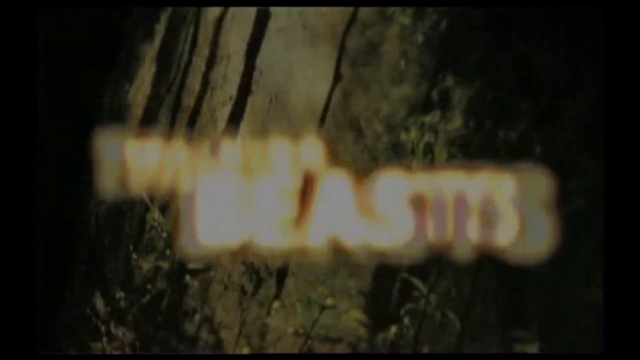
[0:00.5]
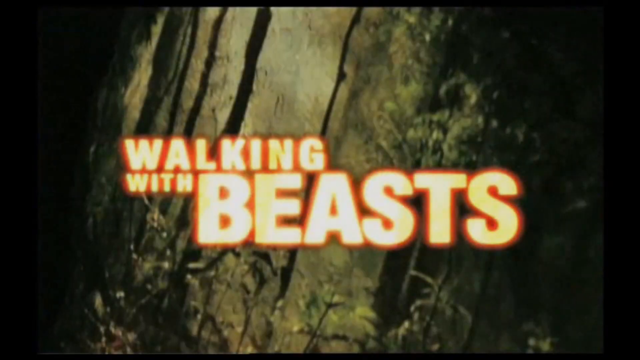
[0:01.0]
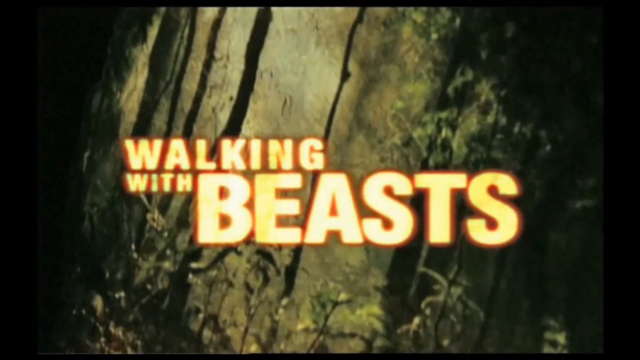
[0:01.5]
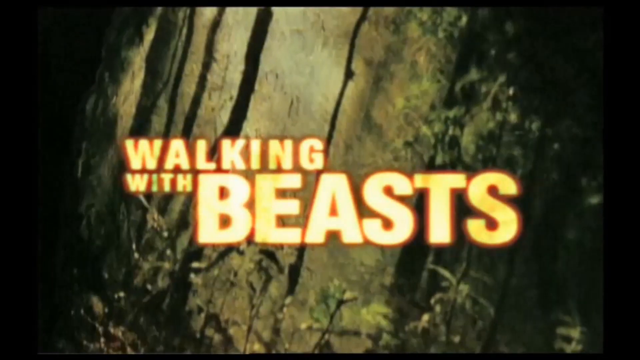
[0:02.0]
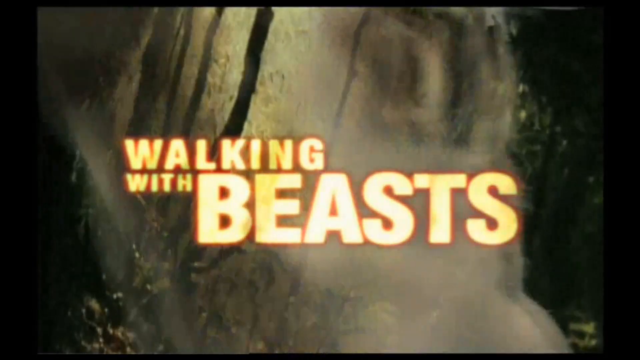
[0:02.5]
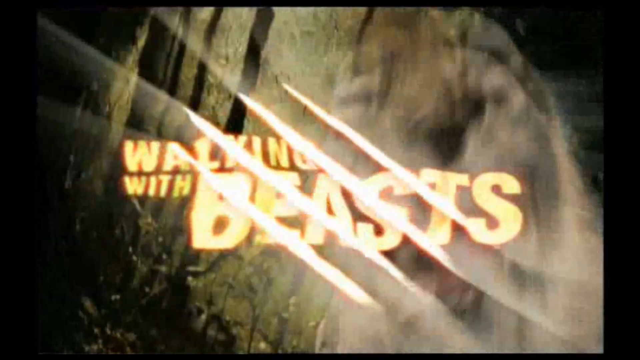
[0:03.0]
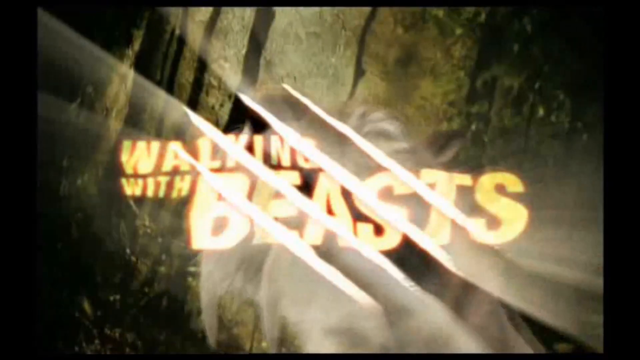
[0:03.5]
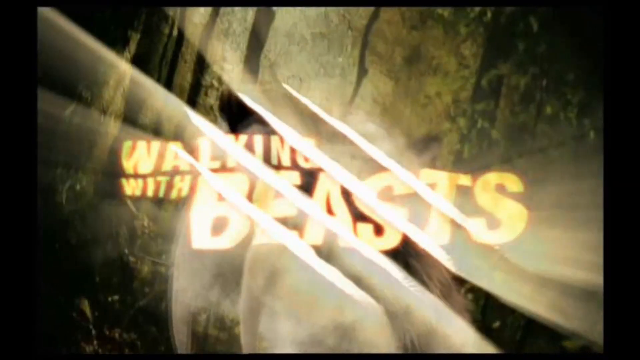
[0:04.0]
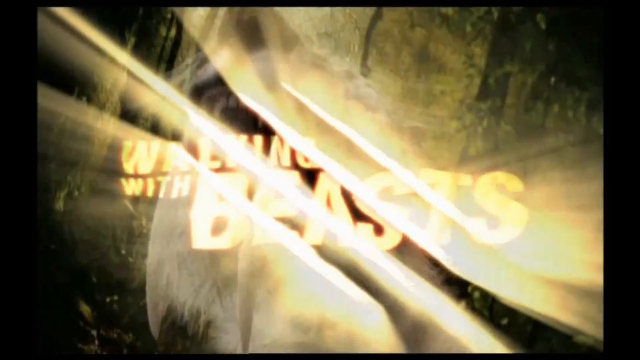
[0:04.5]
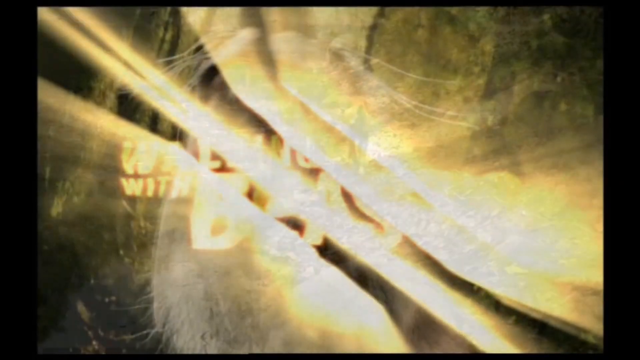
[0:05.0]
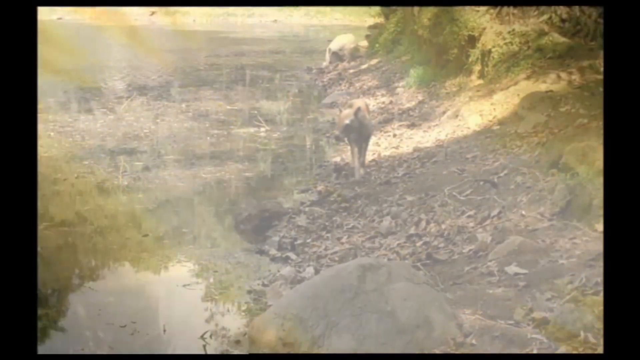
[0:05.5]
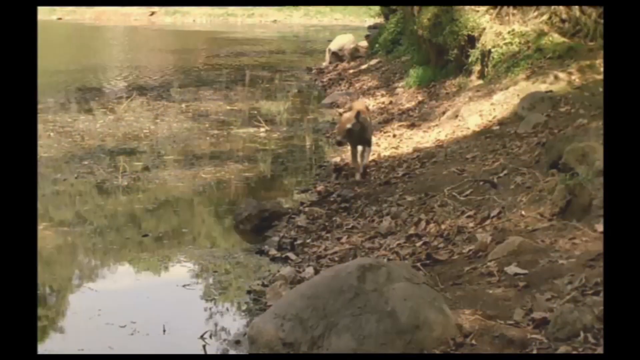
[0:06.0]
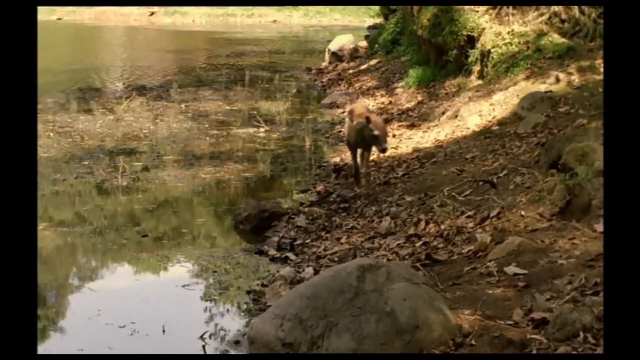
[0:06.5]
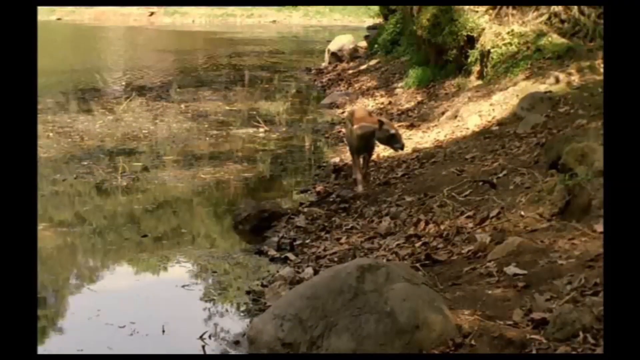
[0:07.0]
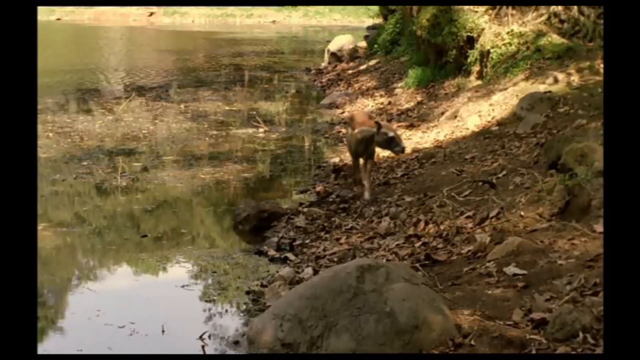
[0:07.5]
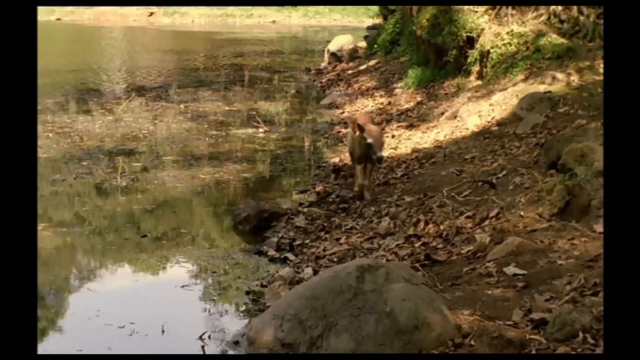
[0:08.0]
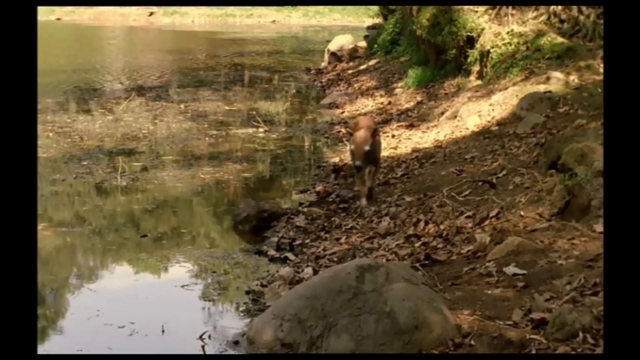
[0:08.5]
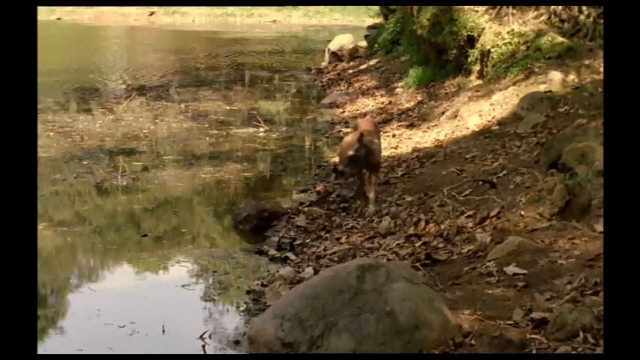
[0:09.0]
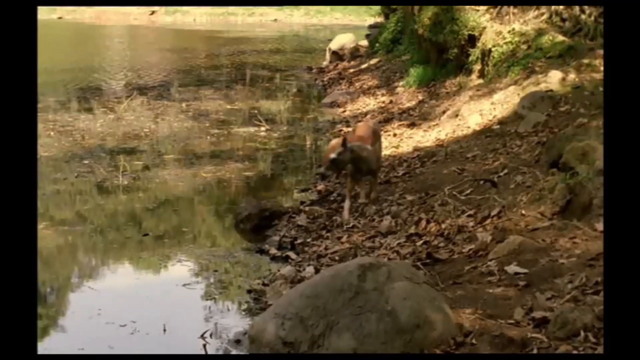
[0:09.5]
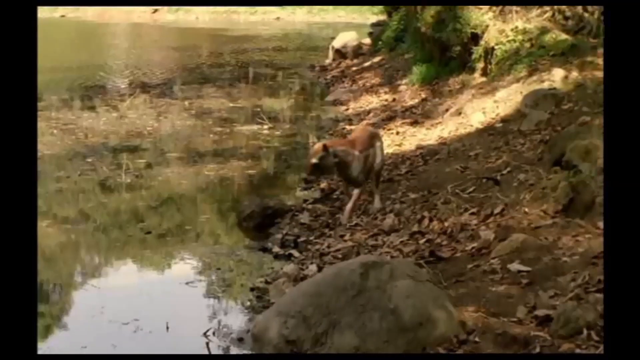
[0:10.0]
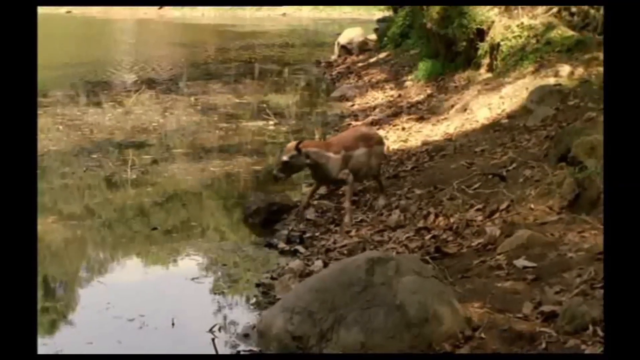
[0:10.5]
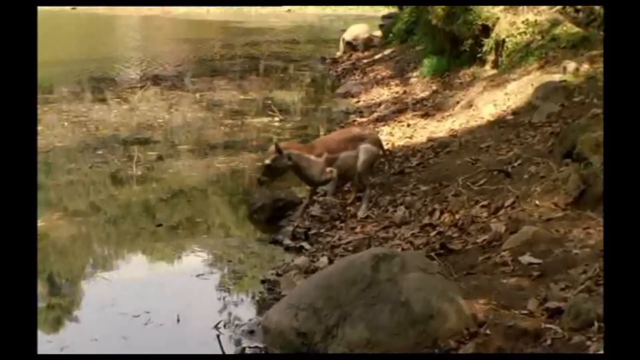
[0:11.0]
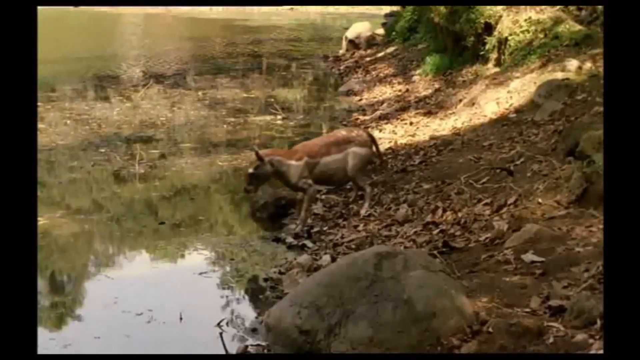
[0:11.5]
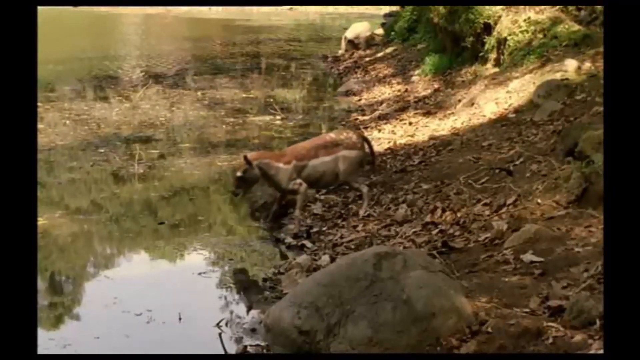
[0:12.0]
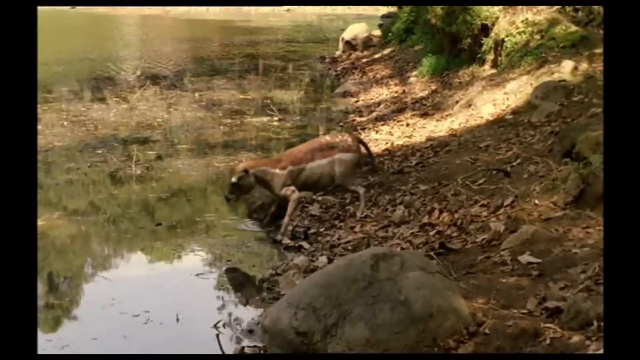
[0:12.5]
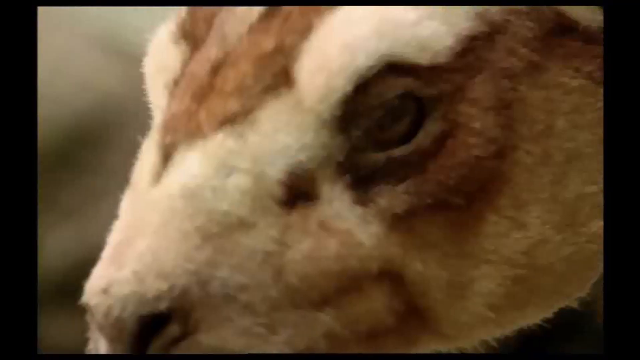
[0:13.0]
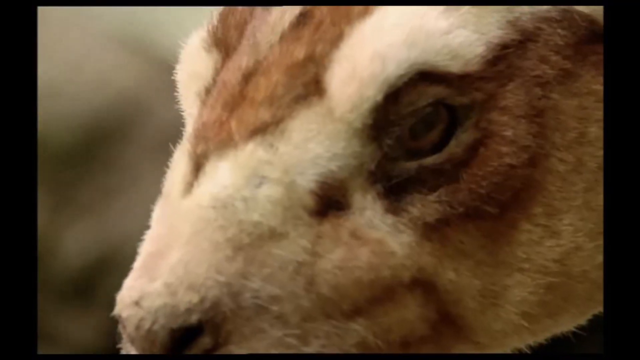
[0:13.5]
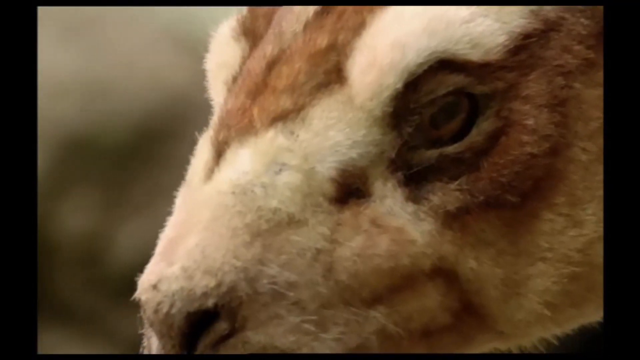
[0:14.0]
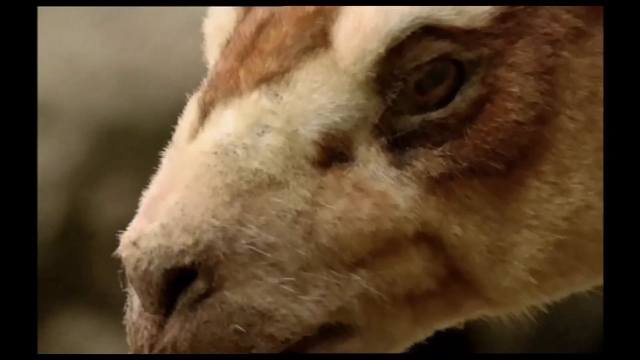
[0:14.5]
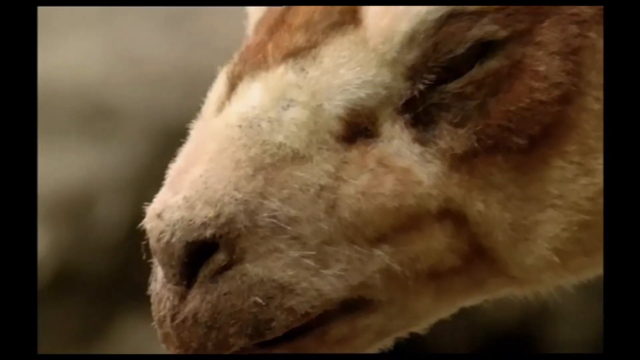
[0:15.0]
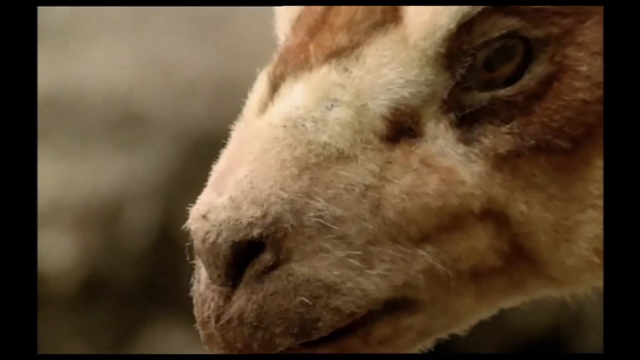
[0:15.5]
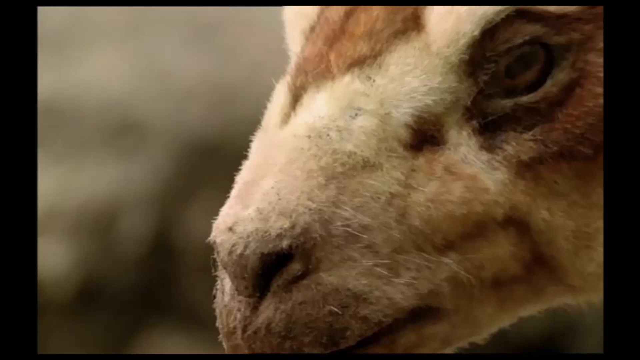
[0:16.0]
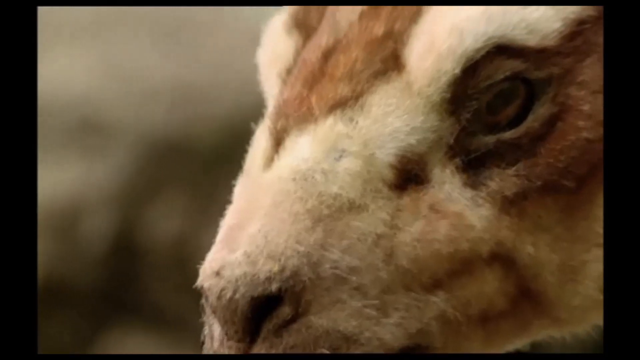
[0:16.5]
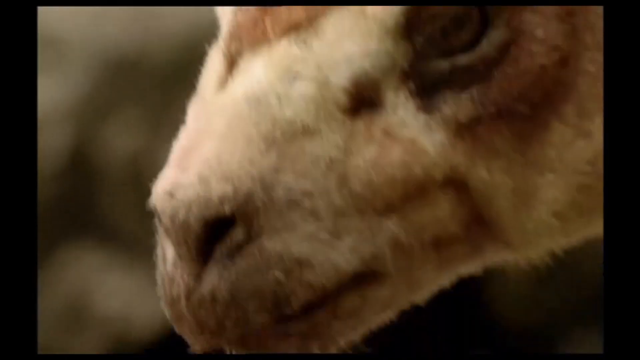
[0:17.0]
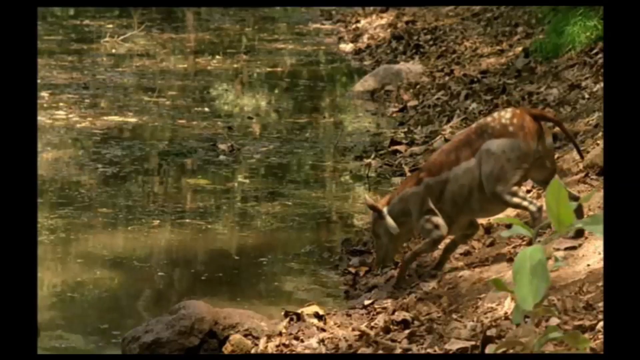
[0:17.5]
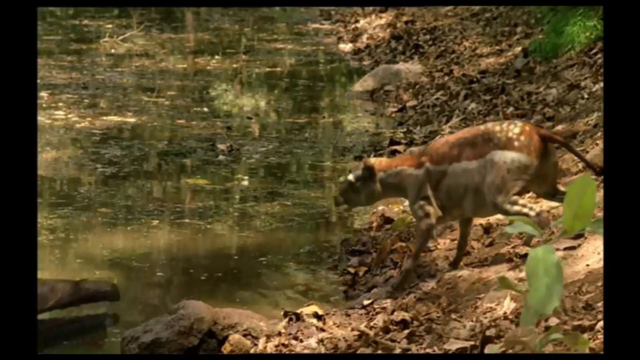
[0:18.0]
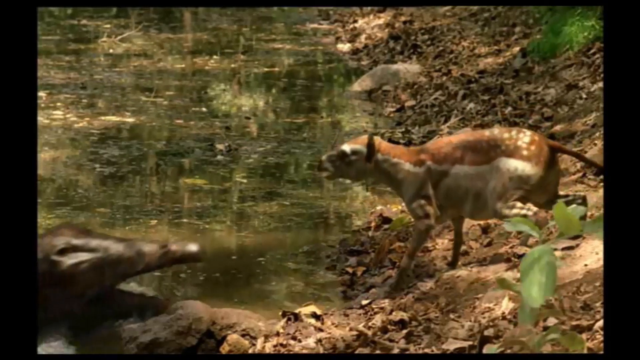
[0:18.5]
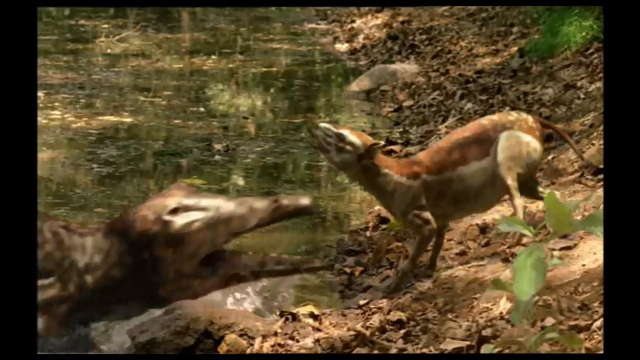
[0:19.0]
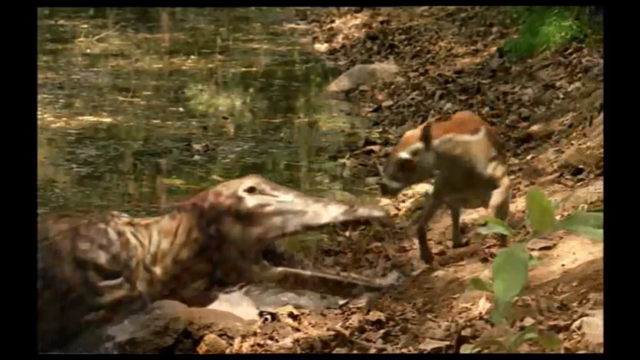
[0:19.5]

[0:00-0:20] The video begins with text that comes out of the screen. The text is fiery in color, yellow-orange, with "with beasts" in a bigger font than the rest; it reads "walking with beasts". The background is a forest with dark colors. Four strikethrough lines of the same color then strike through the width of the text. Next, on a riverbank, a deer-looking animal walks along the bank of the river. The animal is shaped like a buck and has two tones of color: brown on top and beige below, with mixed colors on the head. It walks, then changes direction to face the water of the river or lake. The camera gives a close-up view of the animal, then a view from a distance as the animal tries to bend at the bank and drink some water. An animal that looks like a crocodile but is shaped like a dinosaur emerges out of the water and opens its mouth as though to bite or swallow the young buck.